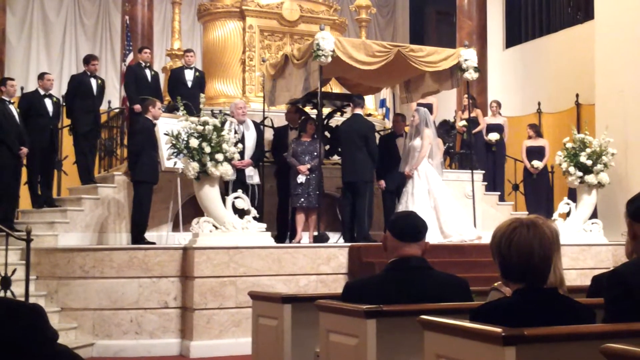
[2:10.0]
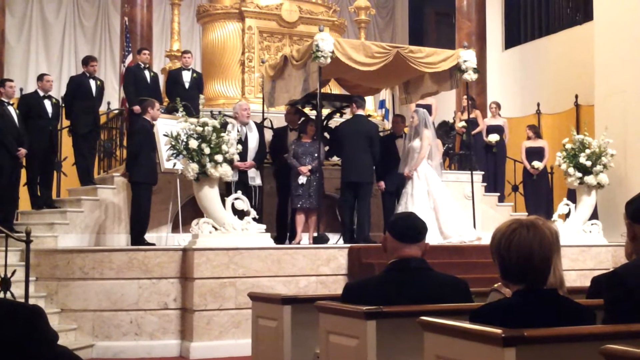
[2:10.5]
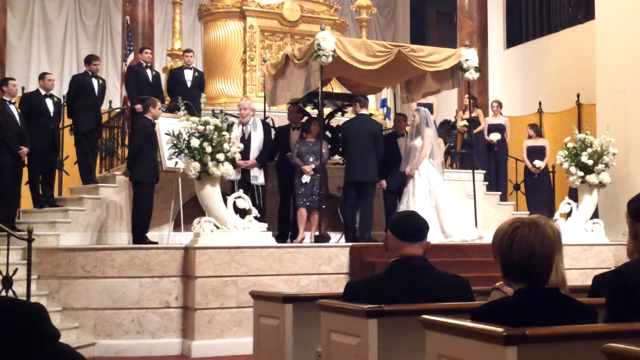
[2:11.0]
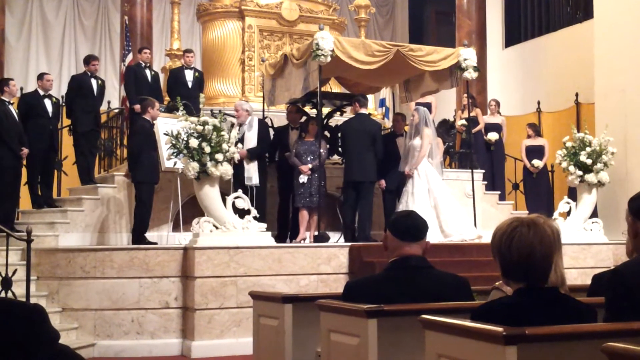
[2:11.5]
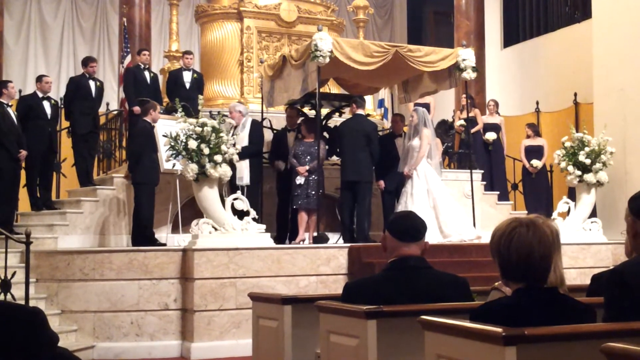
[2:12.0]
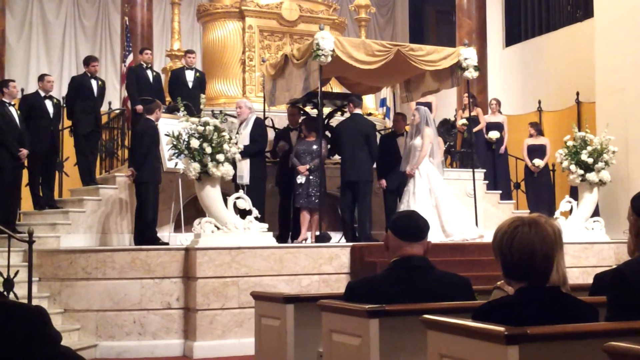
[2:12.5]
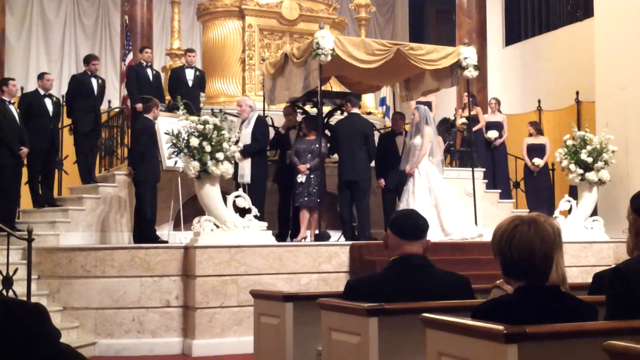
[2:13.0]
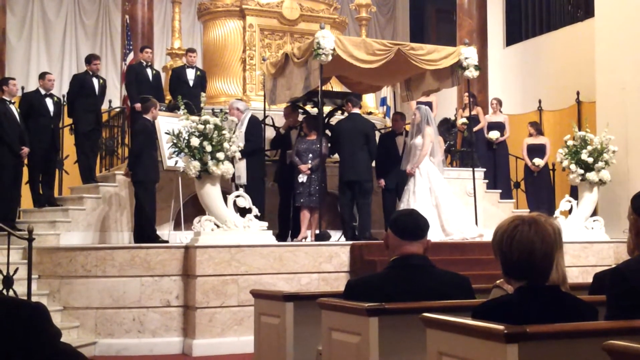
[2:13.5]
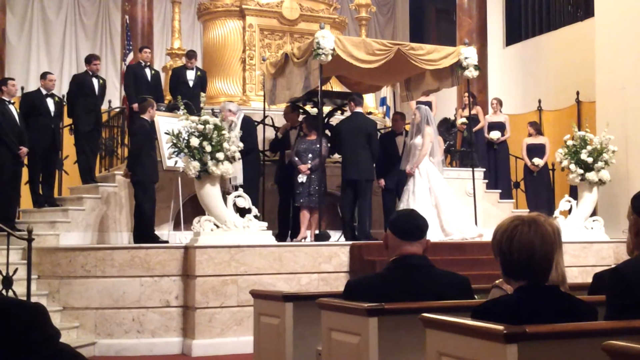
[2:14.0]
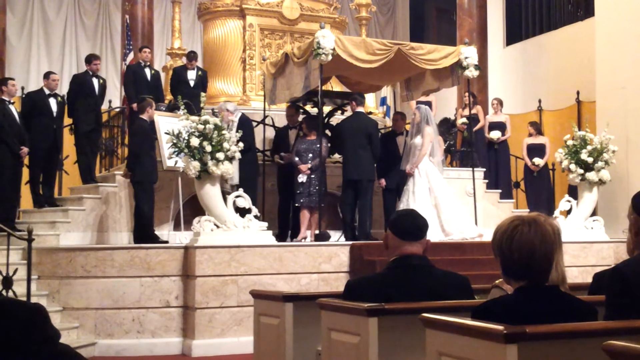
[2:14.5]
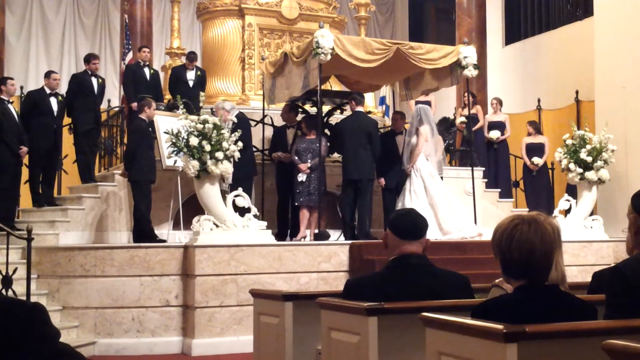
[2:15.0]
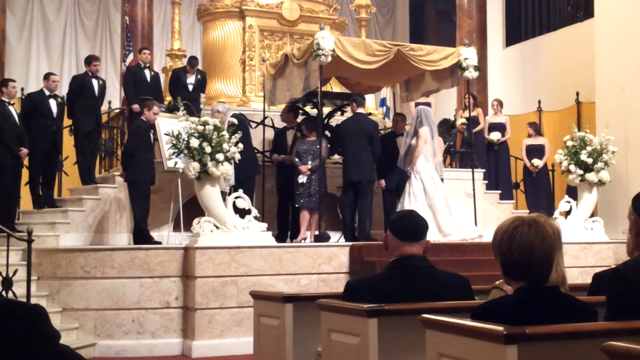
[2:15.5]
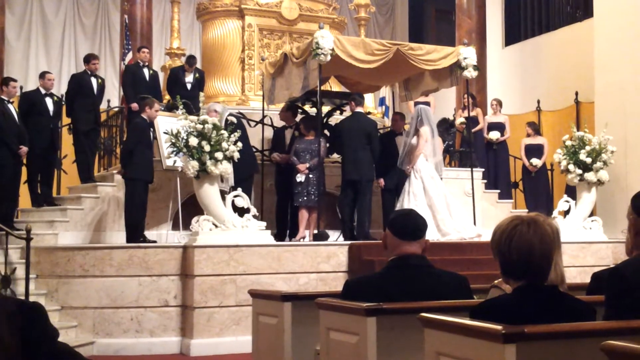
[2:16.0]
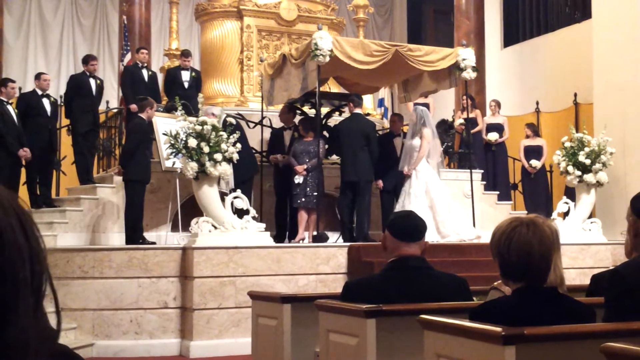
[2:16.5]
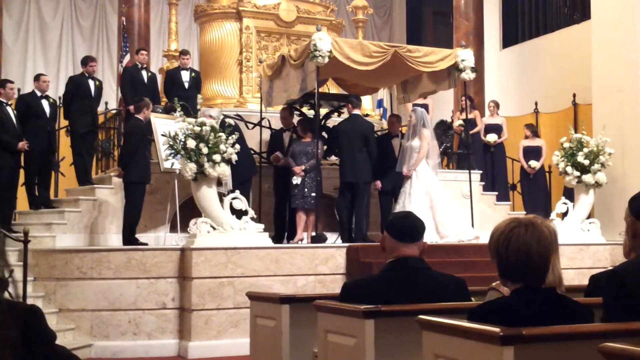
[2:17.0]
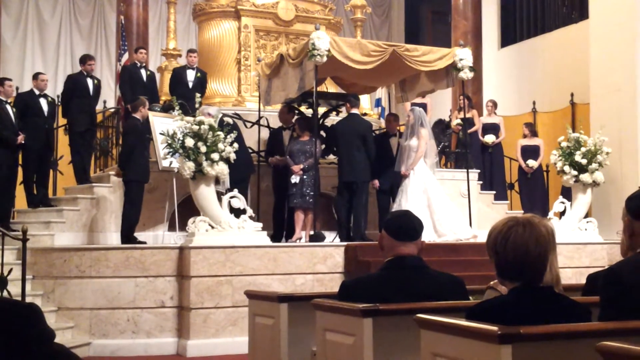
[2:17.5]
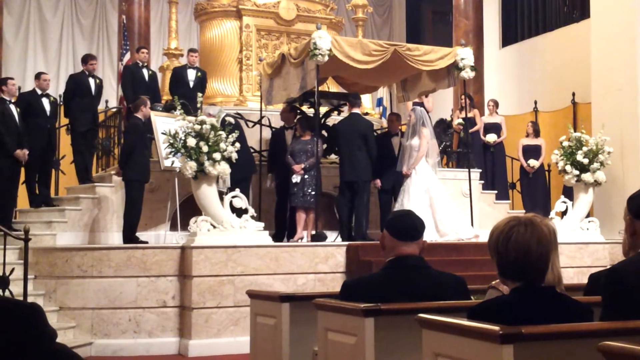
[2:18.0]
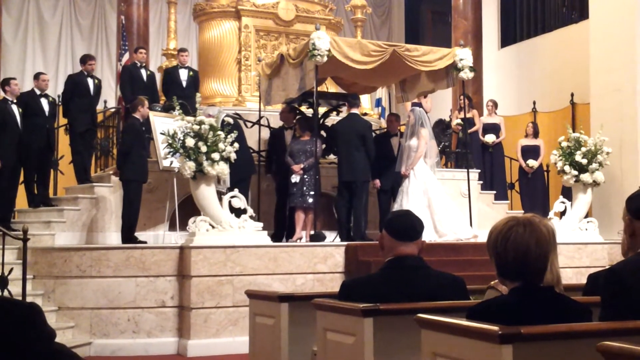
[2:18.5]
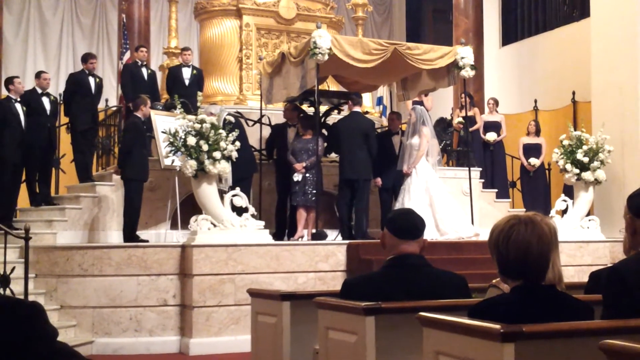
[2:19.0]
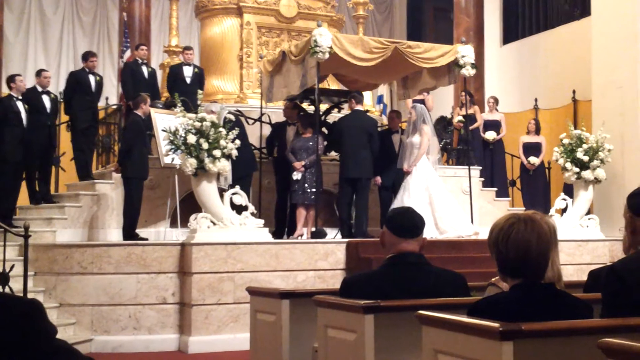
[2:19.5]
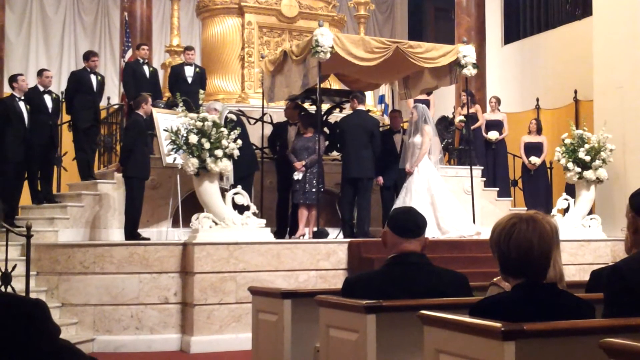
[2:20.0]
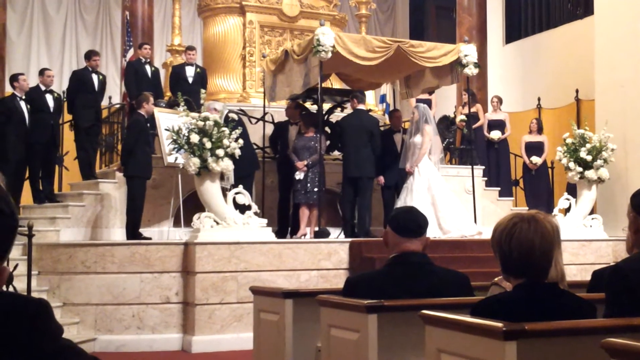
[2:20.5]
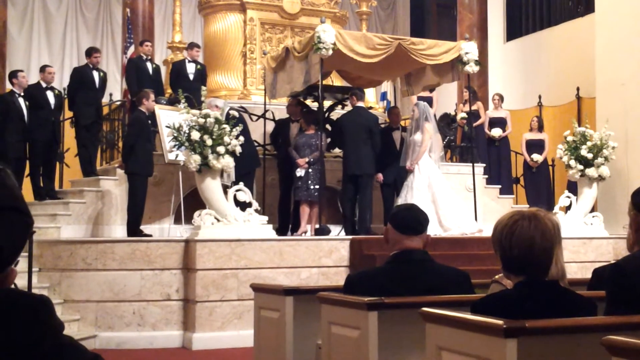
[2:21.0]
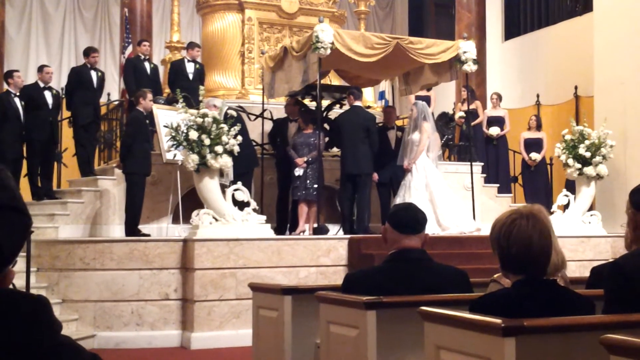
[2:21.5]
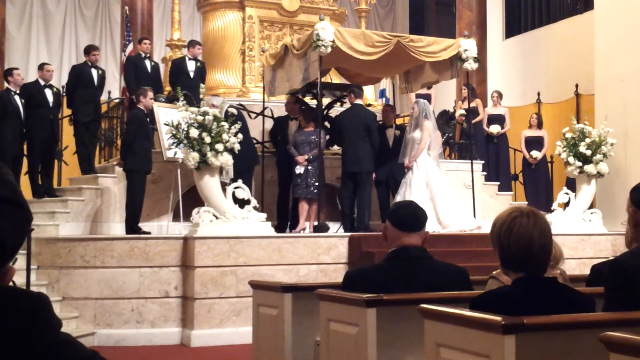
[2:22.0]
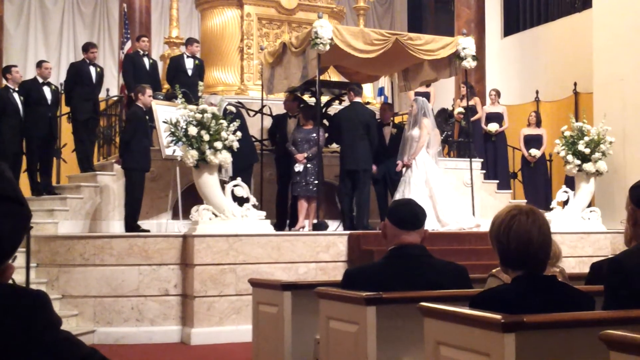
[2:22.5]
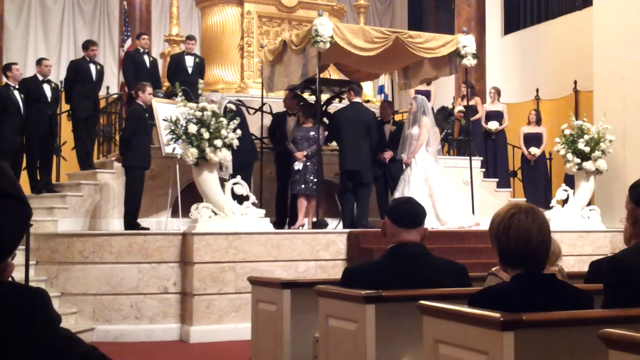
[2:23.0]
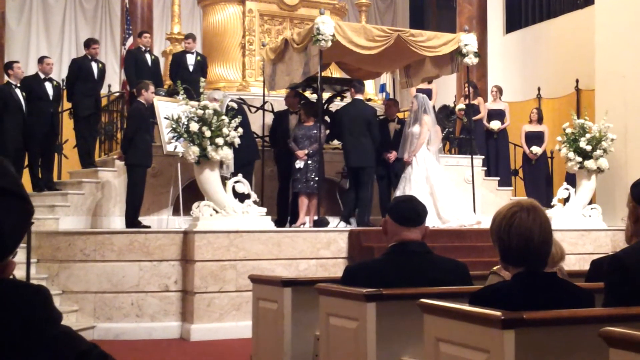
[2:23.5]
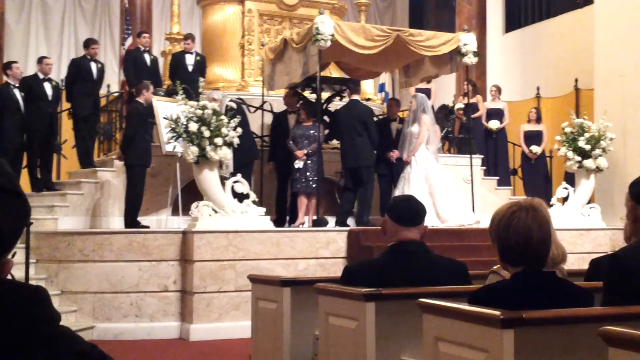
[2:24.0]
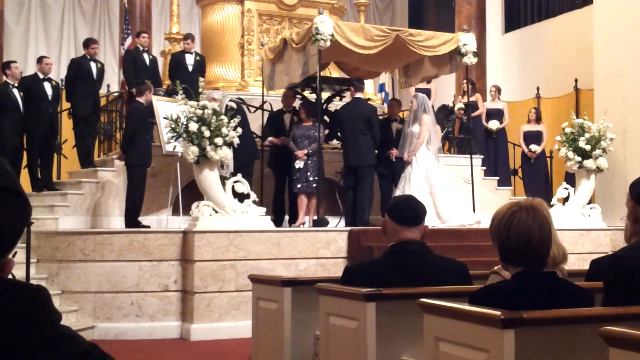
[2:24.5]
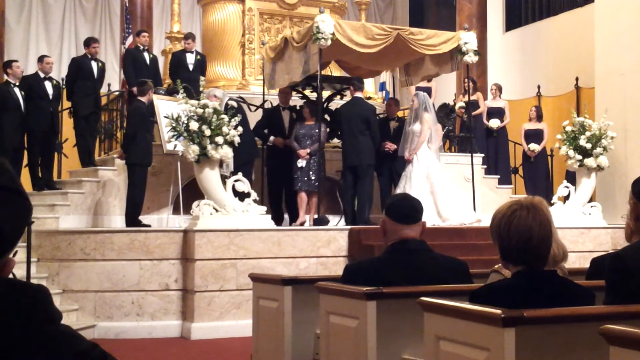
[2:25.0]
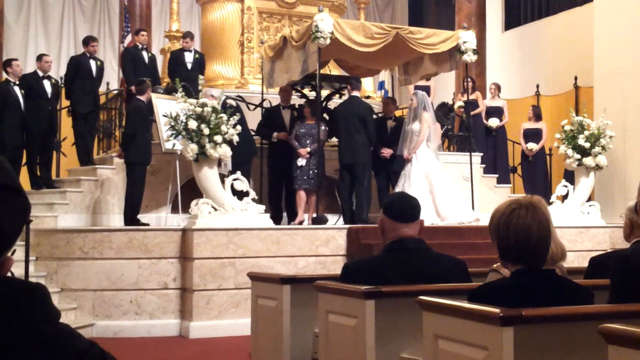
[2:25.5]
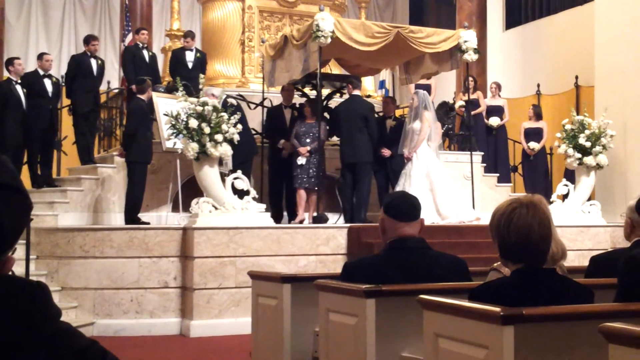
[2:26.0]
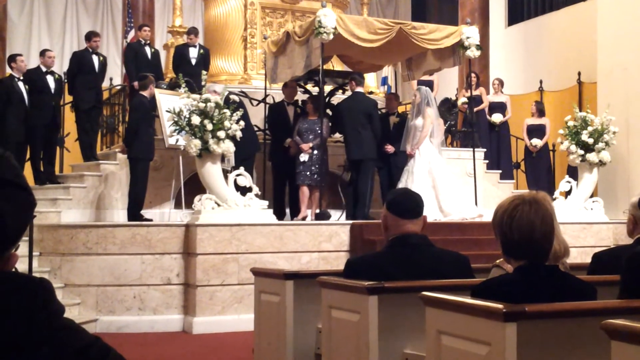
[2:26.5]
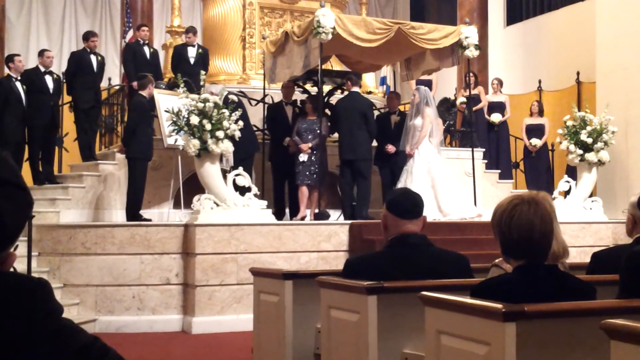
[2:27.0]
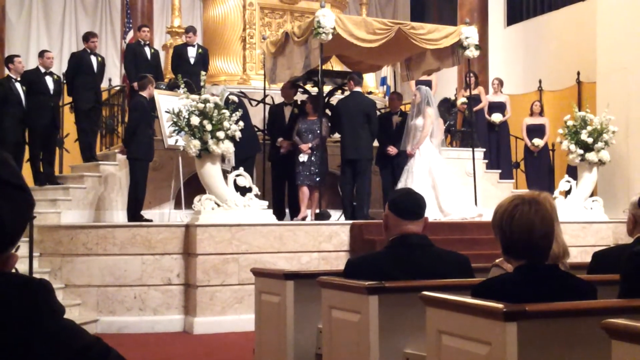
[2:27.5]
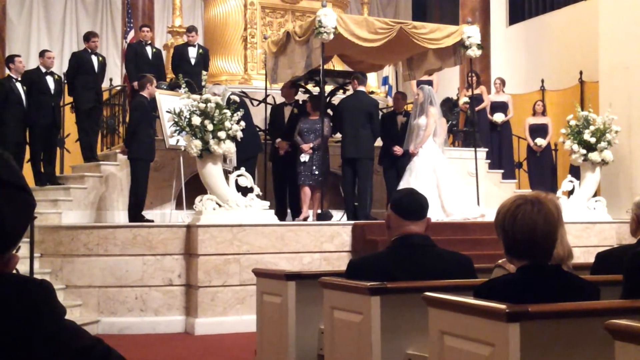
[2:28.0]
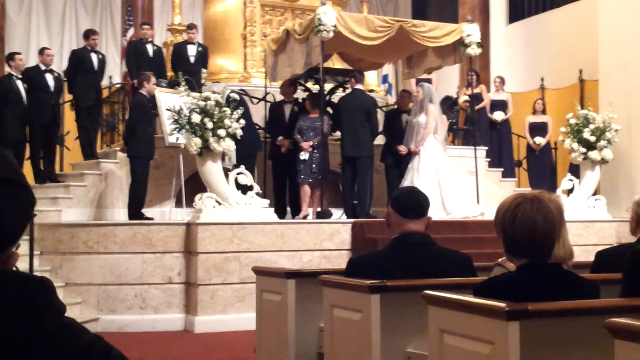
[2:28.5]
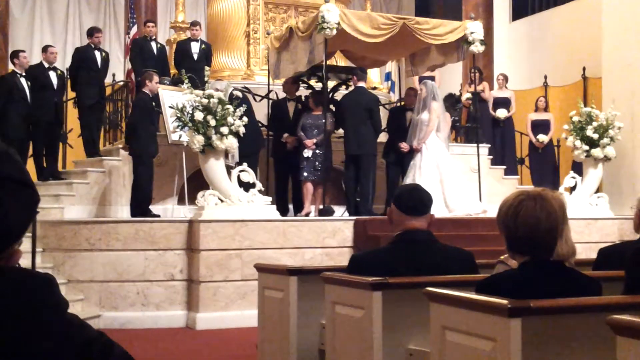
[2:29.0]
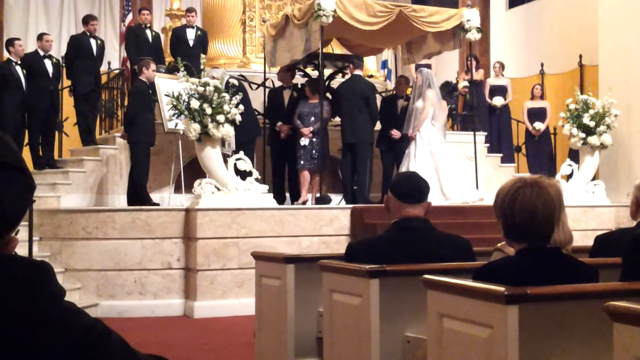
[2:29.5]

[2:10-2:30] The wedding ceremony in the church is seen from behind a few pews, with the camera angled towards the altar and a few people in the pews facing the altar. There is red carpeting, with stone stairs leading up to the altar. Sets of stairs off to the sides lead up and behind the altar, with the groomsmen on the left and the bridesmaids on the right. A canopy with gold fabric on the top serves as the altar, with two elegant vases with bouquets of flowers off to the sides. Under the canopy, the bride and groom in traditional wedding attire face each other, with a few other people, likely witnesses. The minister is off to the left, out from under the canopy, speaking again to the crowd and the wedding party. The minister looks down at something, but the view is obscured by one of the bouquets of flowers.